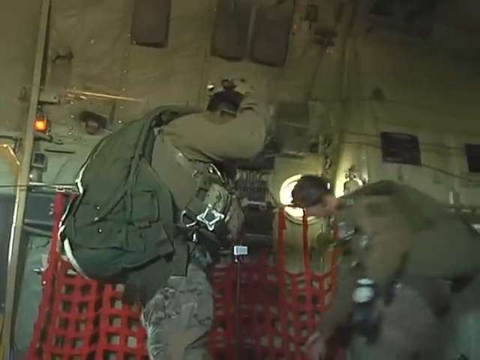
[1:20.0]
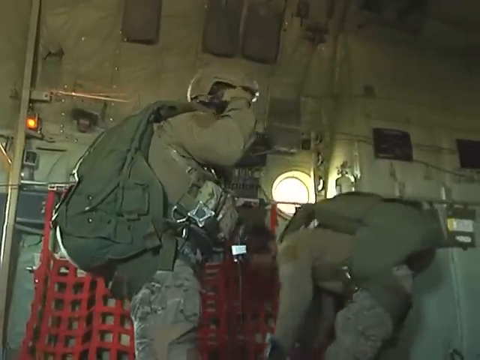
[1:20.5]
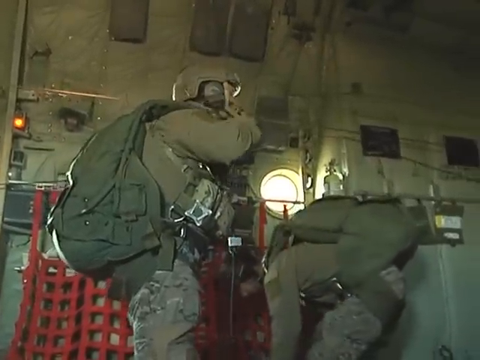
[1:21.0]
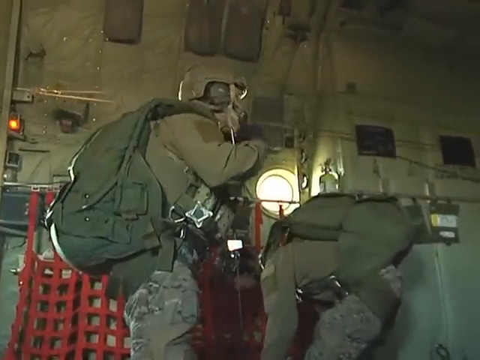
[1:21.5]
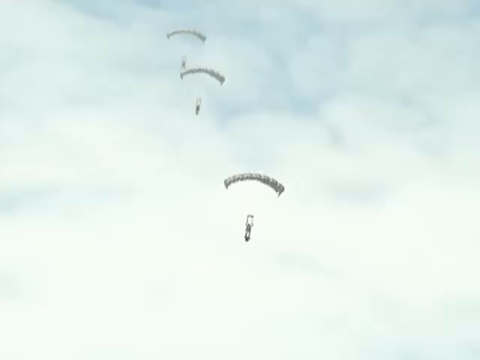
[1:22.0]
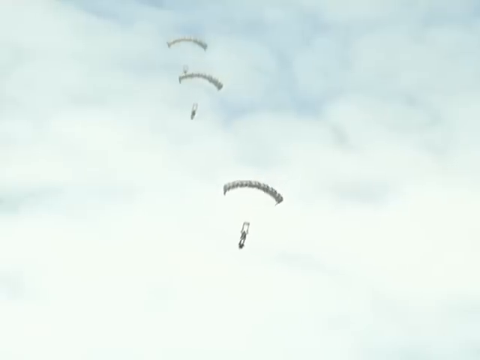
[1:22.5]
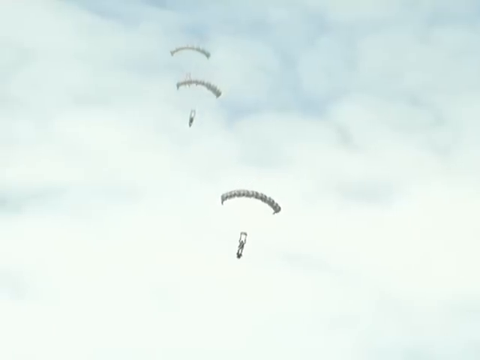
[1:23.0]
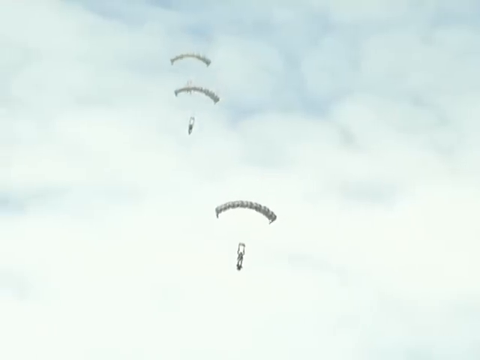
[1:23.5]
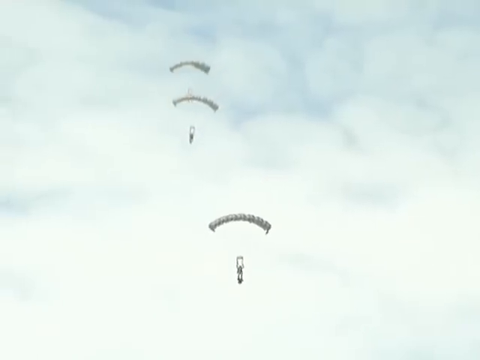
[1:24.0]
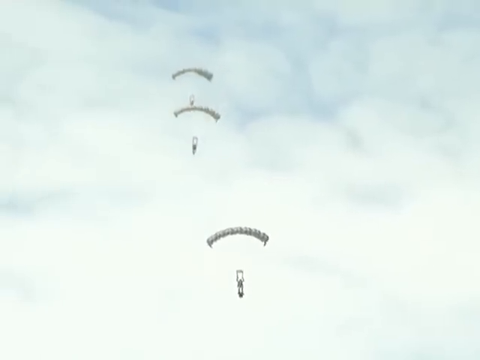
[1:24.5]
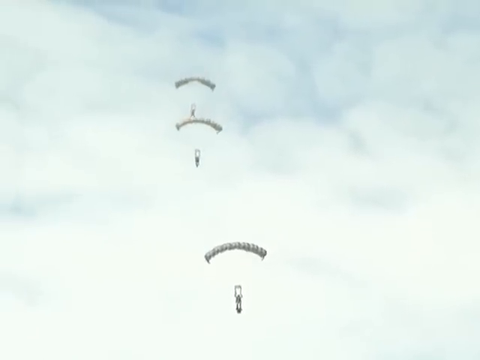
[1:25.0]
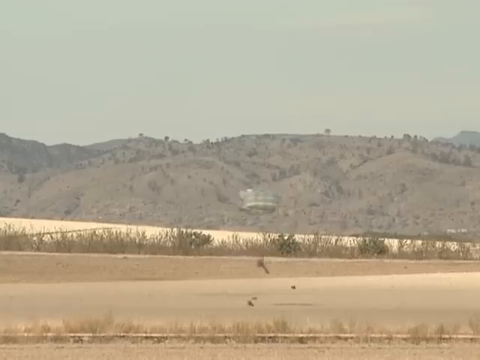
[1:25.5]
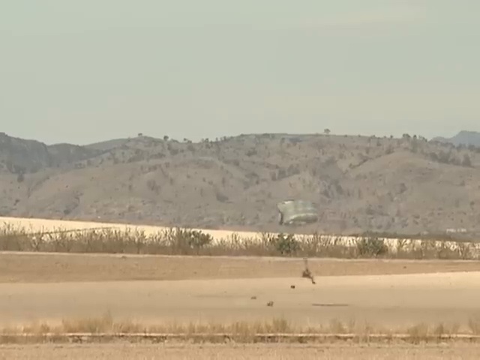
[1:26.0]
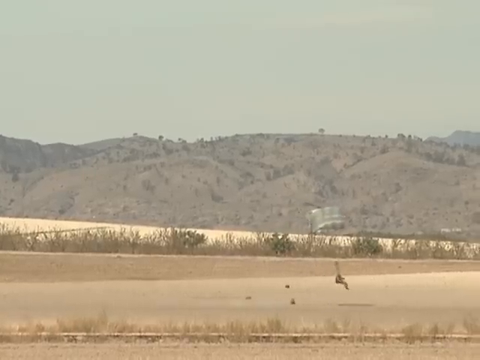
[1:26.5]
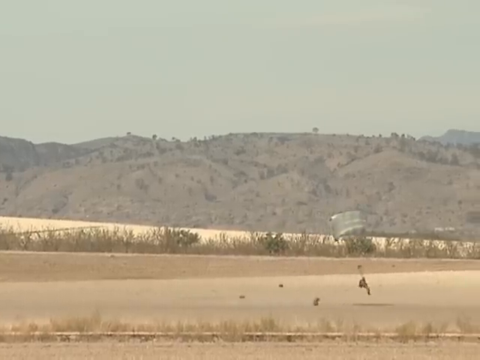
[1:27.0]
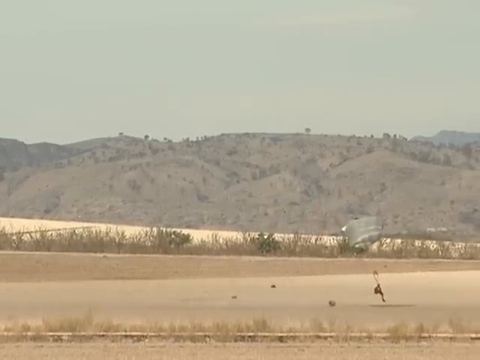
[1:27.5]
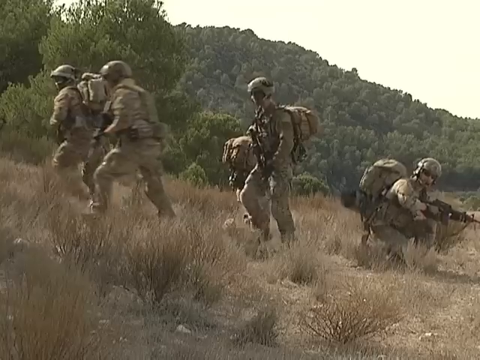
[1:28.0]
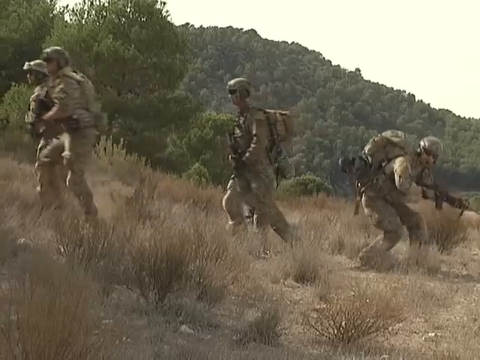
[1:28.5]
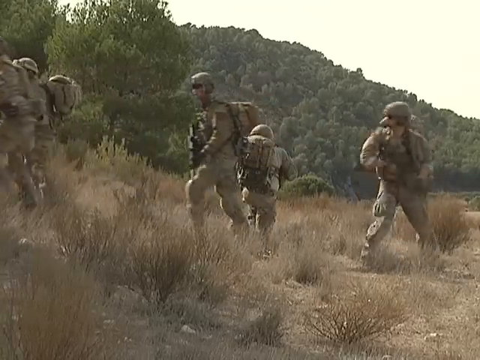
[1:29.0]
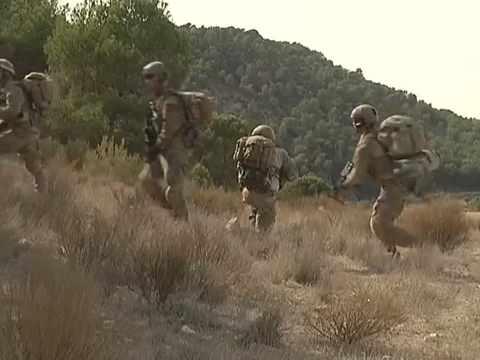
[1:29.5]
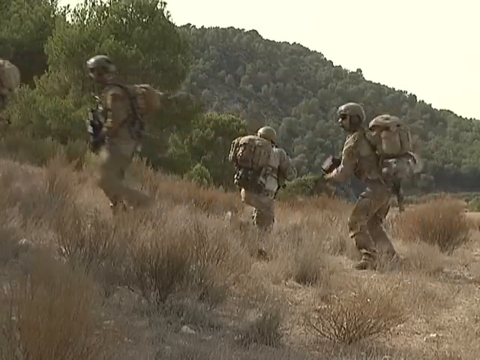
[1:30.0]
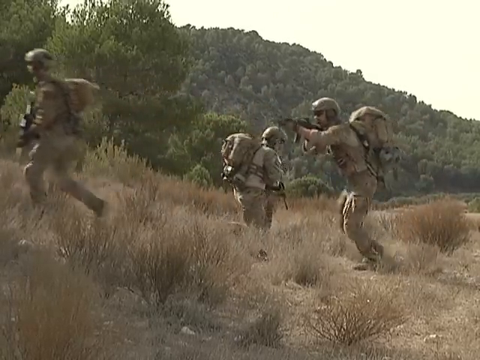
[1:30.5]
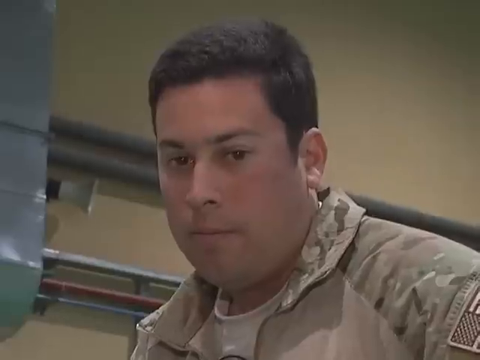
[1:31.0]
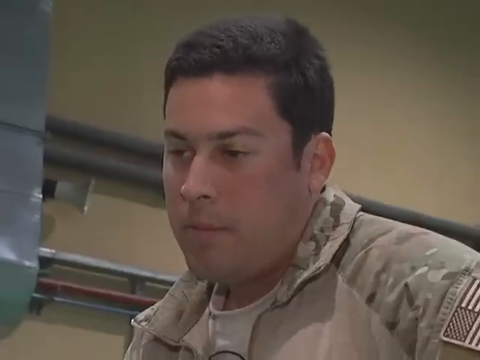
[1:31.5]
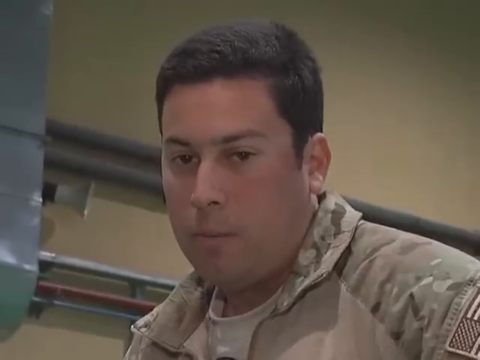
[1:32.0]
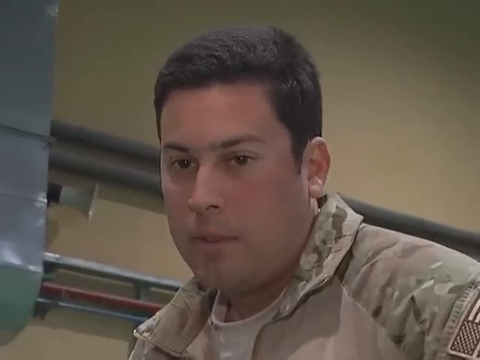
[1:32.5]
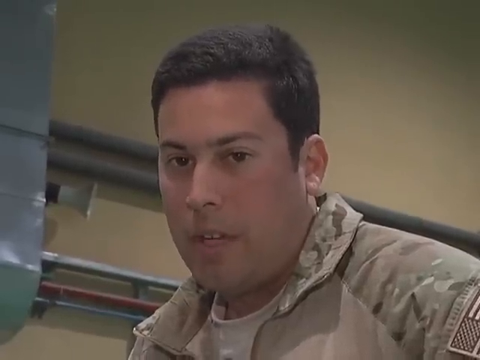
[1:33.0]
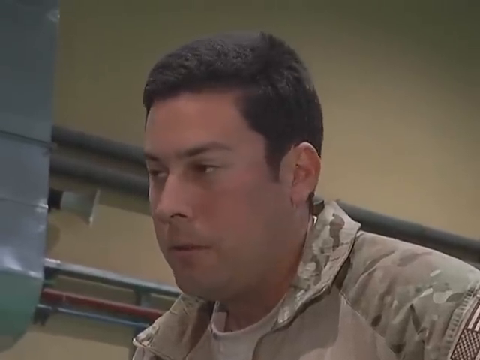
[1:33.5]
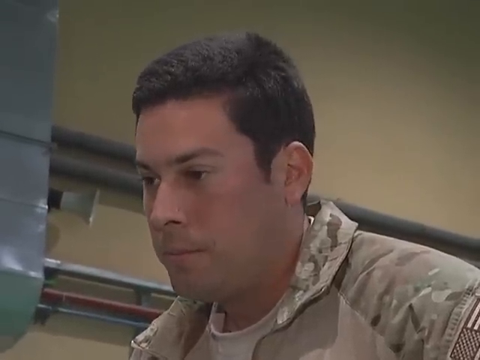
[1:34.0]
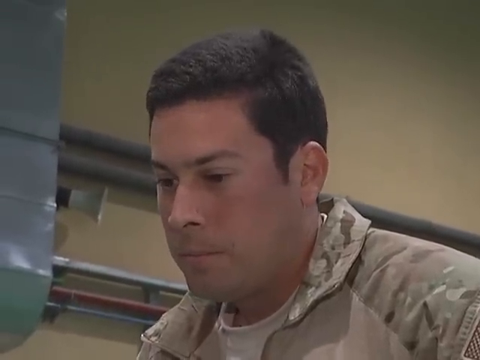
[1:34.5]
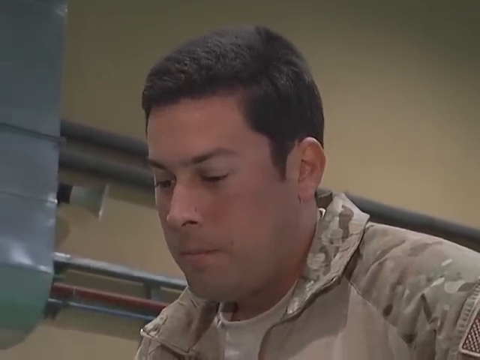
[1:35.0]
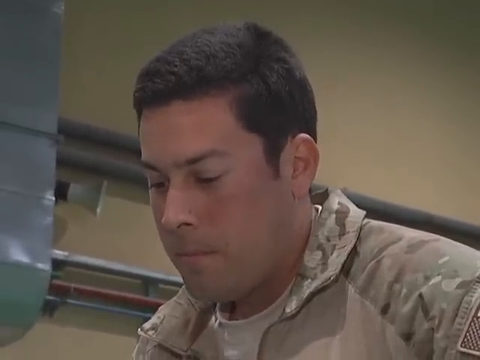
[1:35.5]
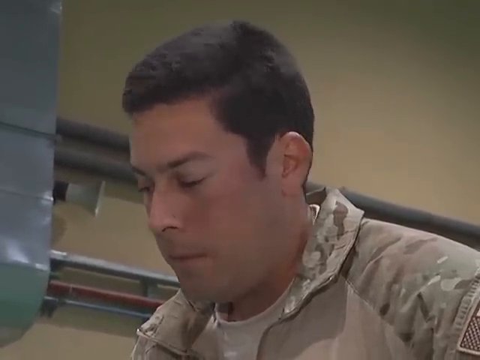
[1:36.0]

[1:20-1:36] Two men wearing helmets are inside the body of a large army transport plane, looking as though they are preparing to jump with parachutes. Three men then descend on parachutes from the sky. One of them lands in an area that looks like desert with hills in the background; he glides into view and comes to rest toward the right side of the screen. A group of five soldiers in uniform, each holding a gun and with packs on their backs, stand in an area with hills in the background and tall grasses on the ground around them. They turn to look in different directions as they all start to move to the left of the screen. A close-up then shows a soldier in beige army fatigues with very short black hair speaking to someone off-camera; he looks straight ahead for part of the interview, then turns to look to the side.